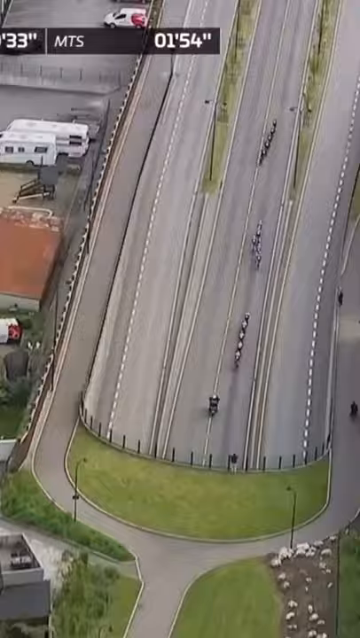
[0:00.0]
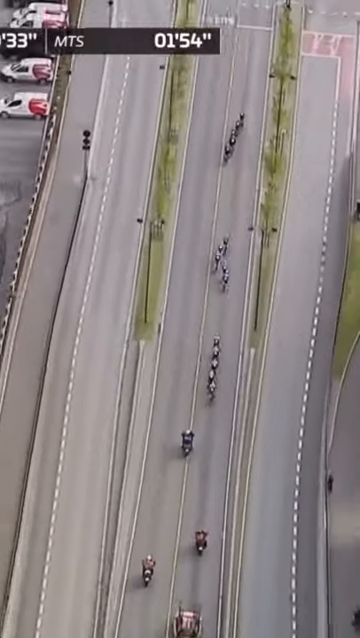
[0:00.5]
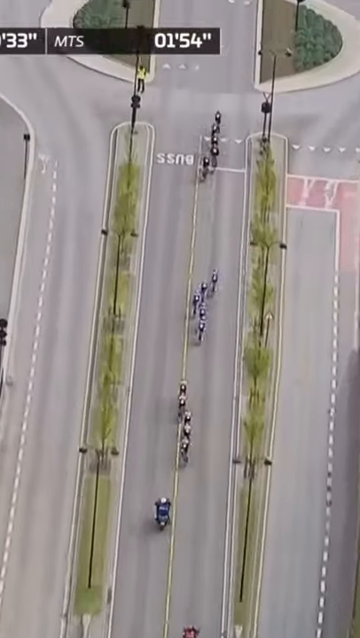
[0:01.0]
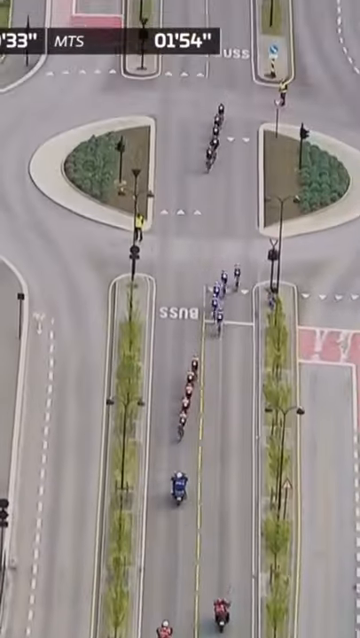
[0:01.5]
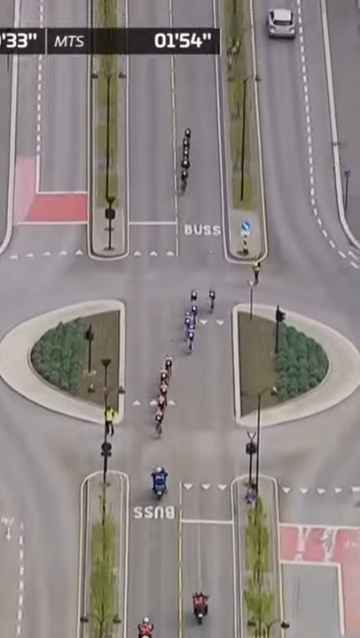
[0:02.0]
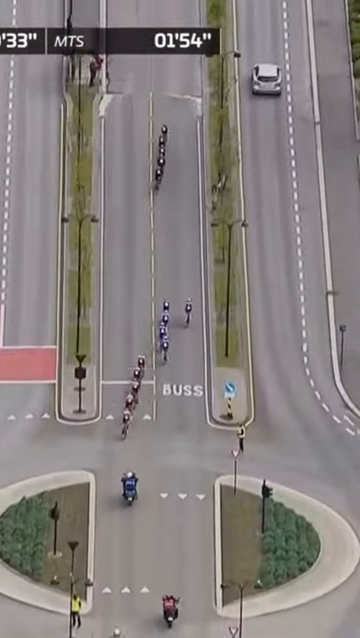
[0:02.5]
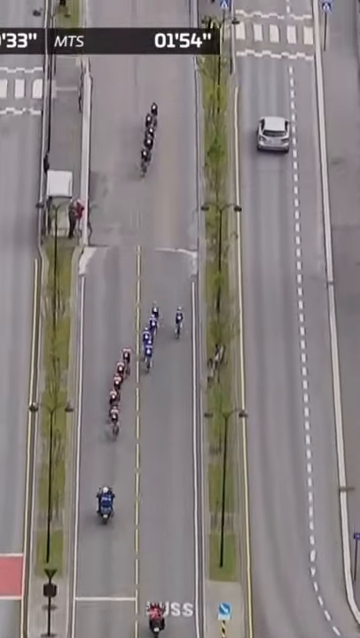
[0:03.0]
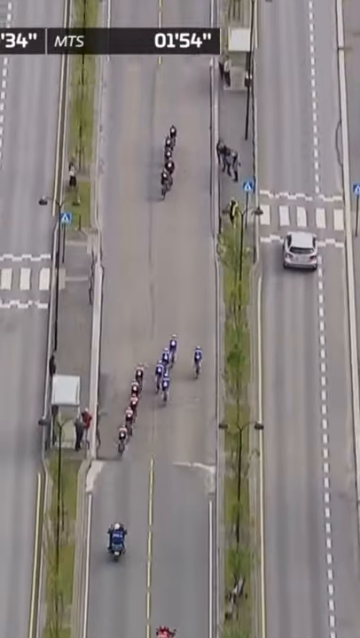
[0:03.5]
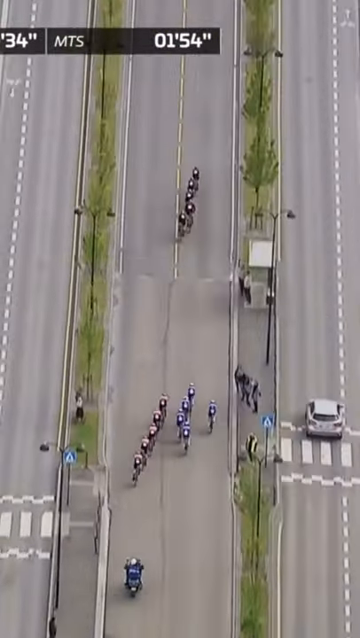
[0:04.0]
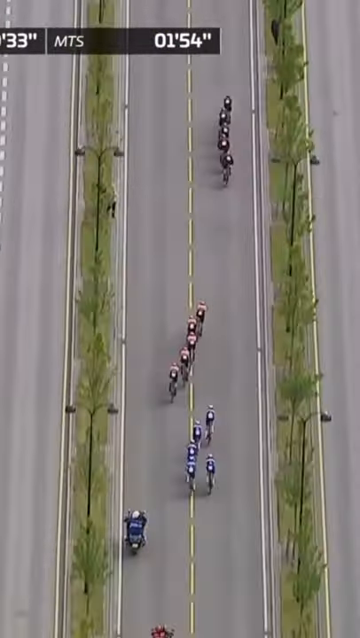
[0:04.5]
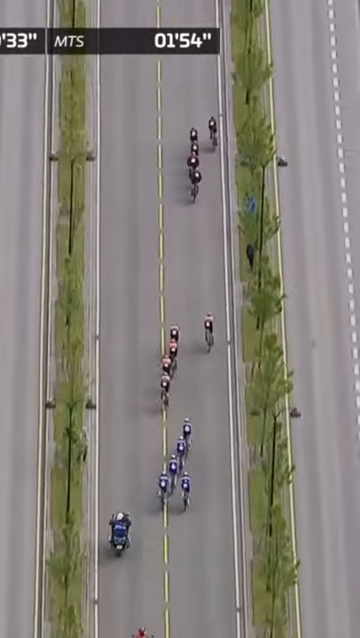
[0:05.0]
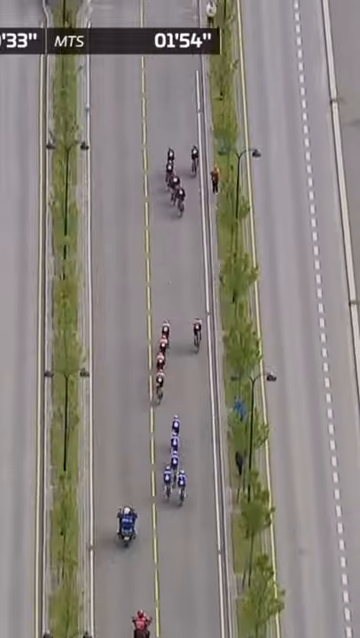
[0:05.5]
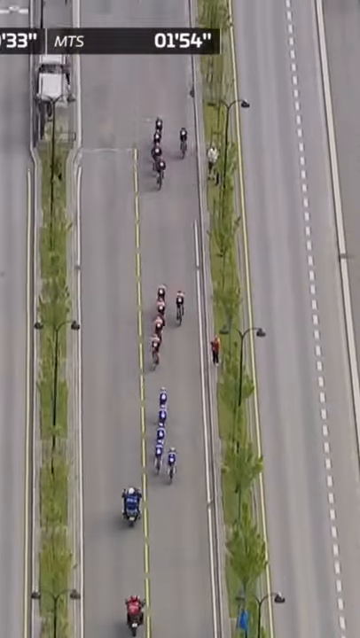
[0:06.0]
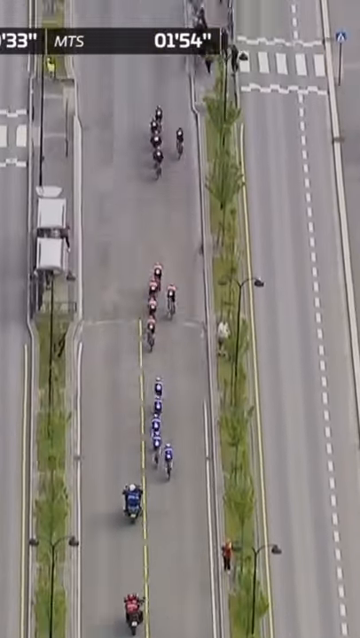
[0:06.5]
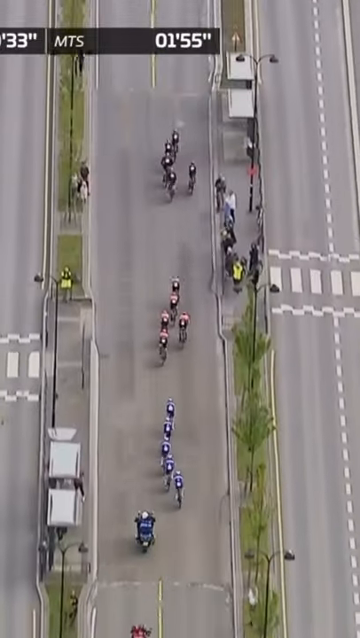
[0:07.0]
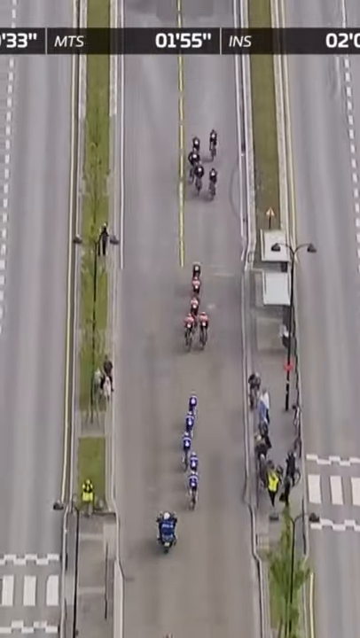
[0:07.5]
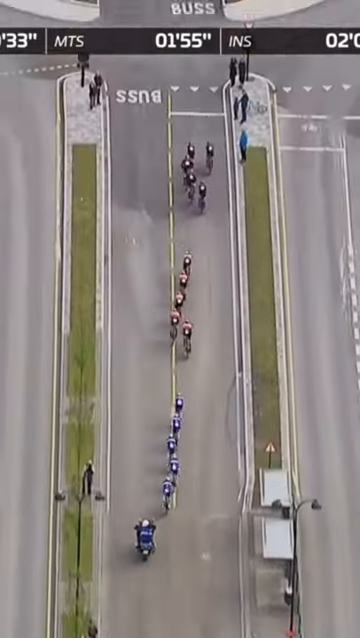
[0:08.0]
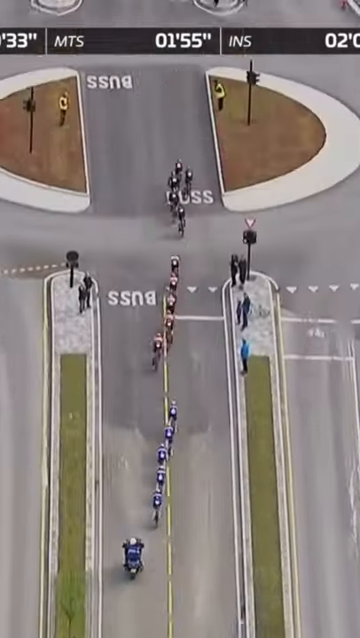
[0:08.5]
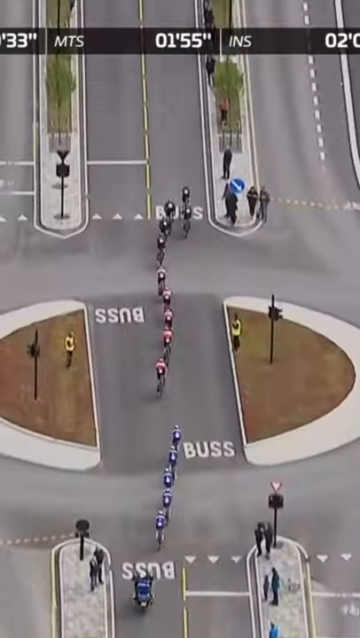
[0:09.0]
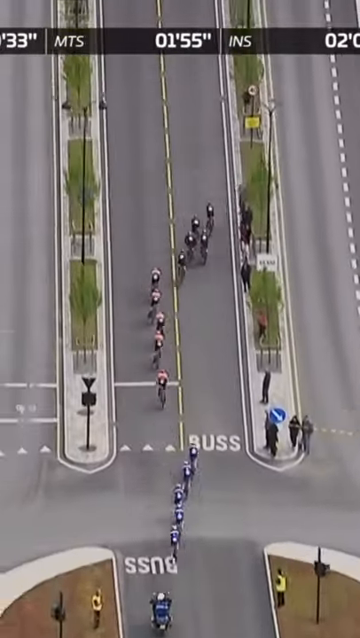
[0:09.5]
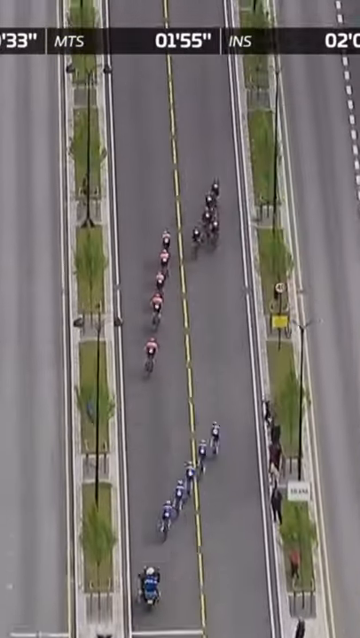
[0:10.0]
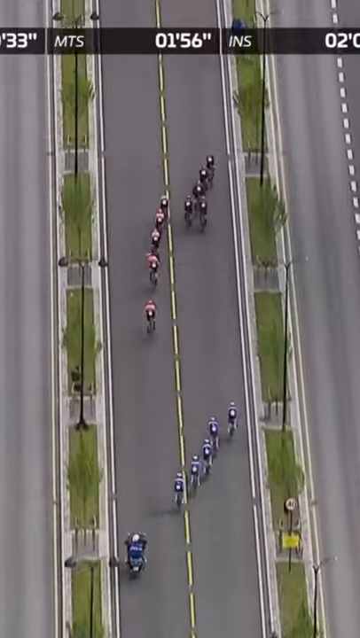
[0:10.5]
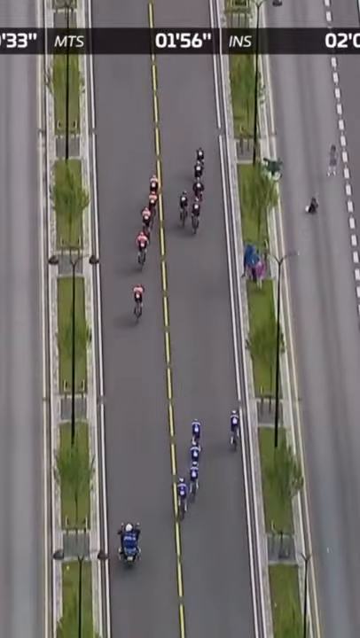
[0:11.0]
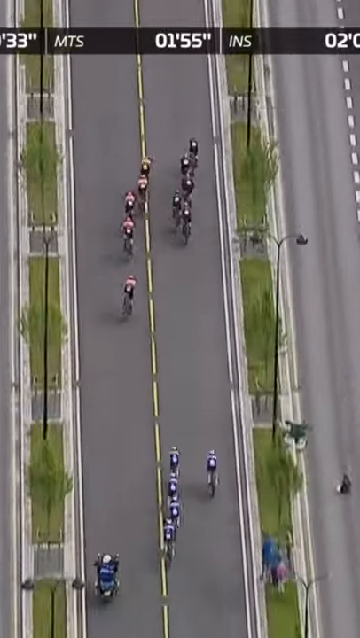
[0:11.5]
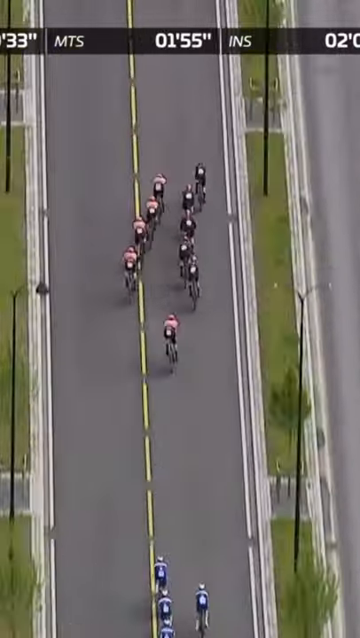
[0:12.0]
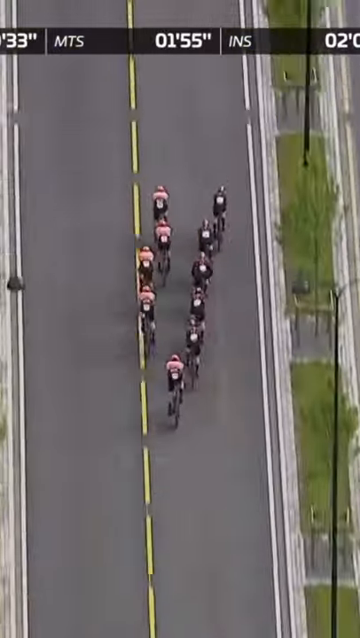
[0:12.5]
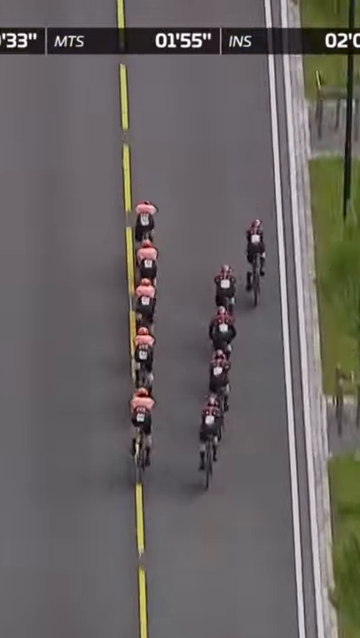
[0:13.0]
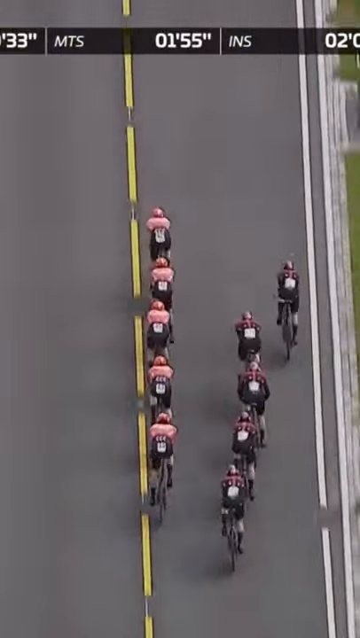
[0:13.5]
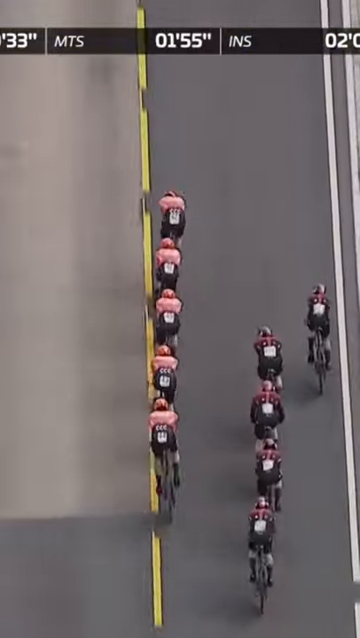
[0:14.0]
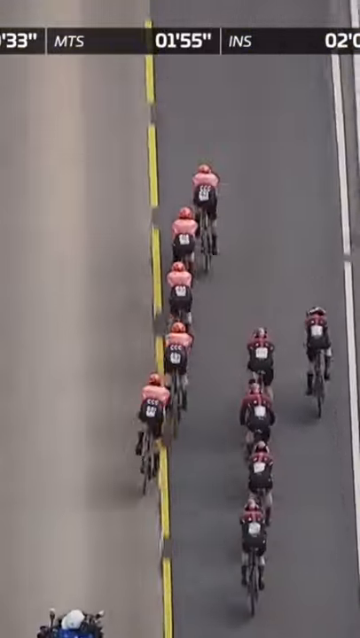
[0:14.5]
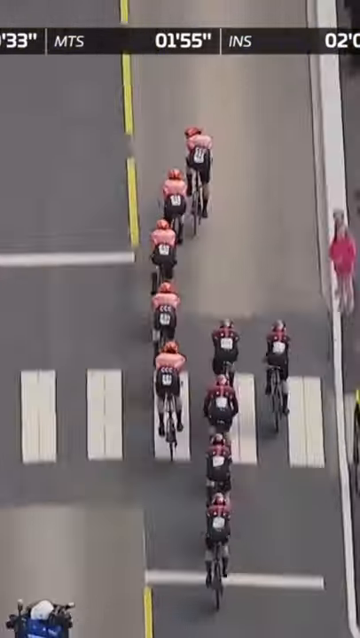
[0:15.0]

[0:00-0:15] From a bird's-eye view, a group of cyclists rides down a road at very high speed, though the footage looks like it is fast-forwarded. The cyclists move rapidly down a path with a thin green median on either side, drafting by riding close behind one another. They rotate who is in front: the lead rider drops back and lets someone else take over. There appear to be three different groups of cyclists, and a black banner with some white lettering runs across the top of the screen. One of the teams passes both of the other teams over the course of the shot.